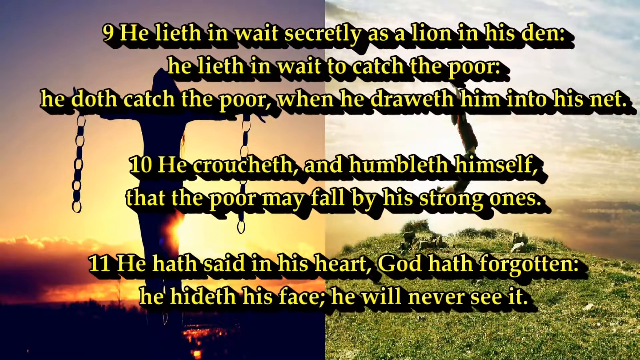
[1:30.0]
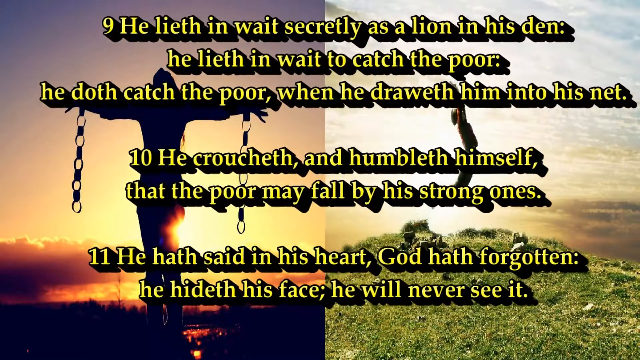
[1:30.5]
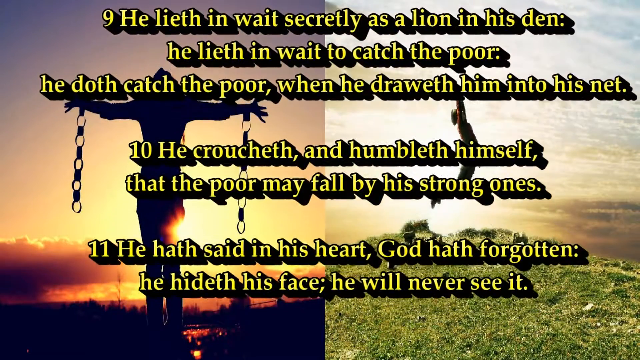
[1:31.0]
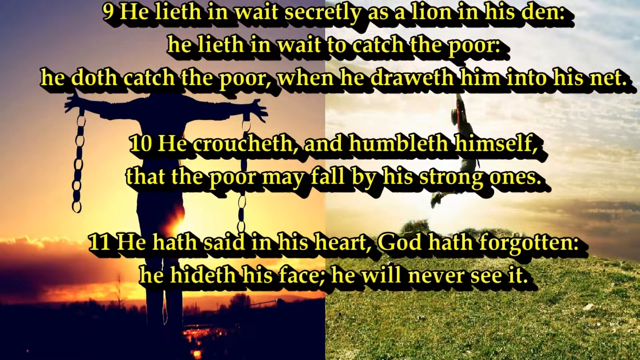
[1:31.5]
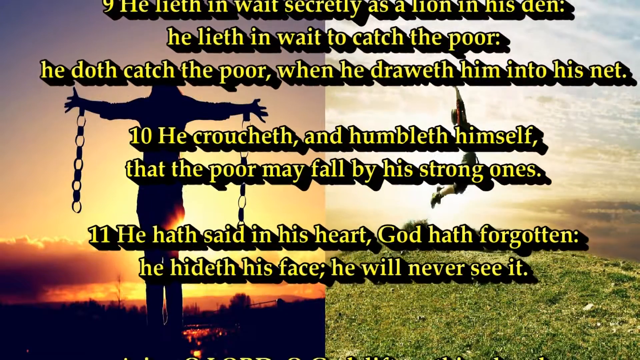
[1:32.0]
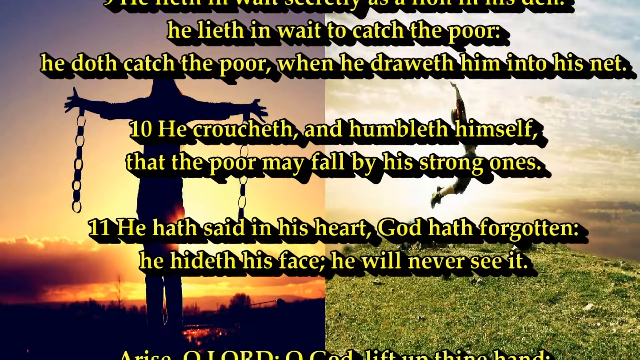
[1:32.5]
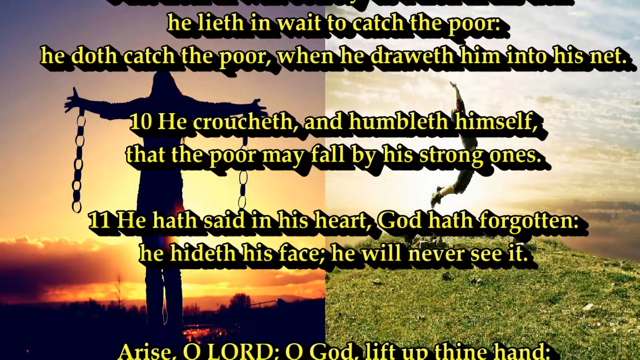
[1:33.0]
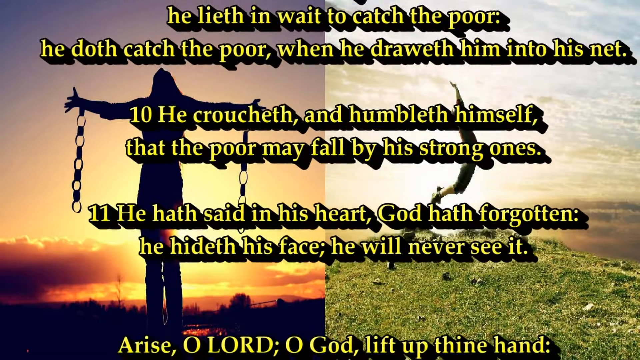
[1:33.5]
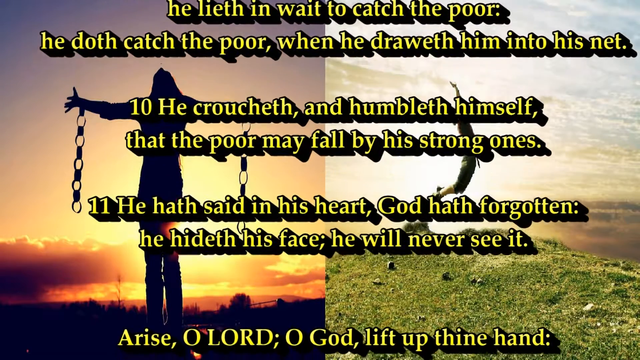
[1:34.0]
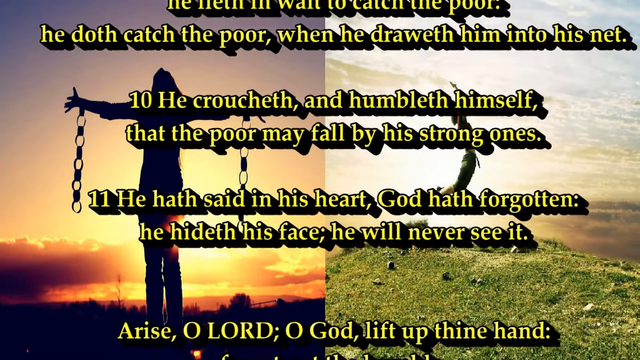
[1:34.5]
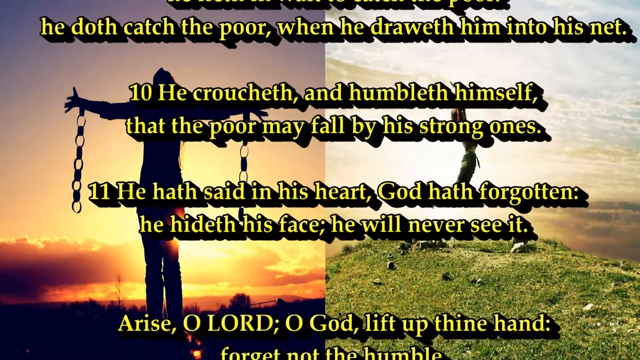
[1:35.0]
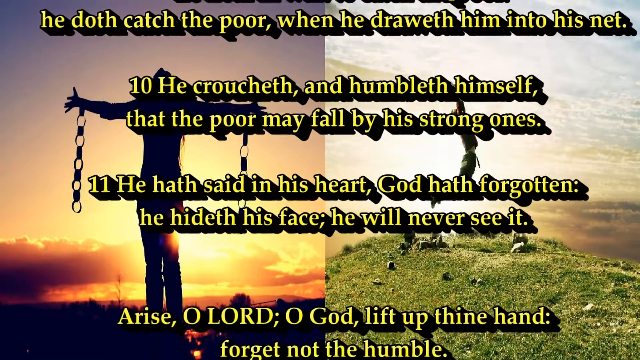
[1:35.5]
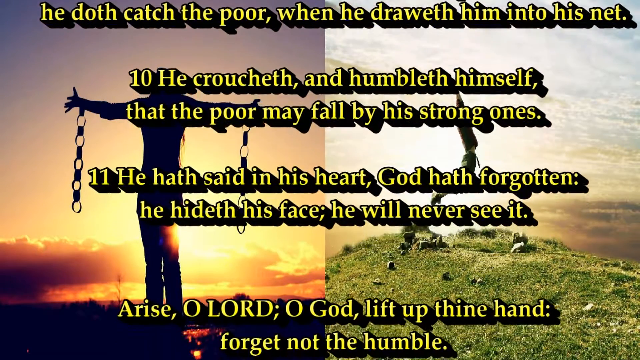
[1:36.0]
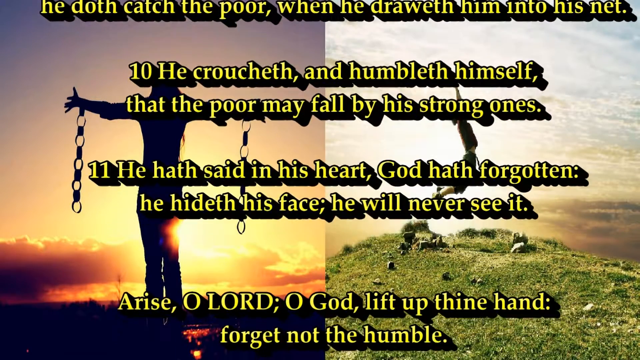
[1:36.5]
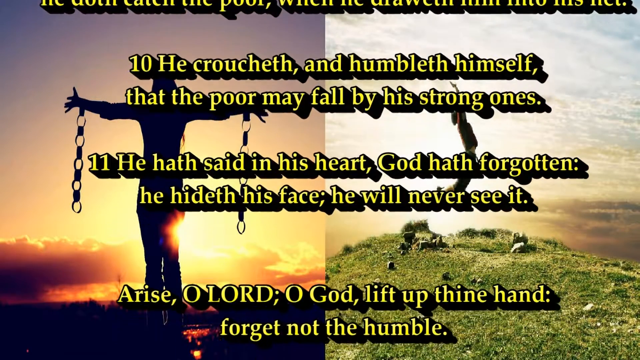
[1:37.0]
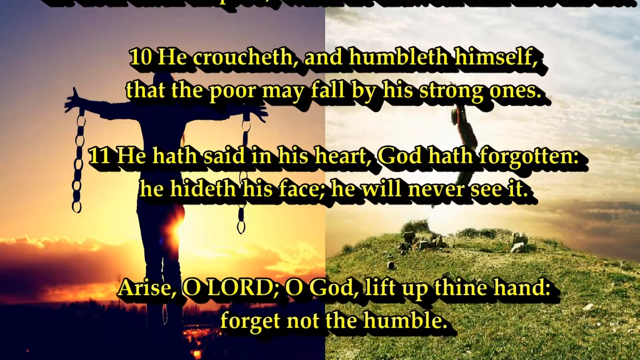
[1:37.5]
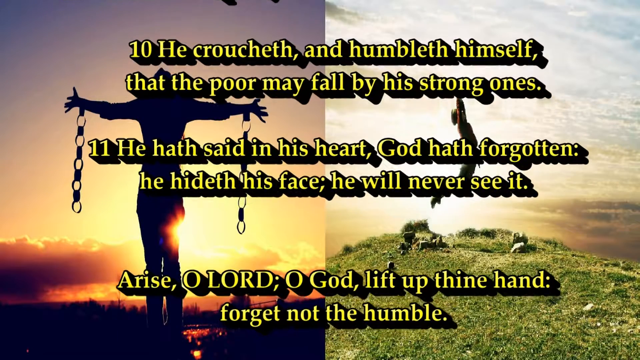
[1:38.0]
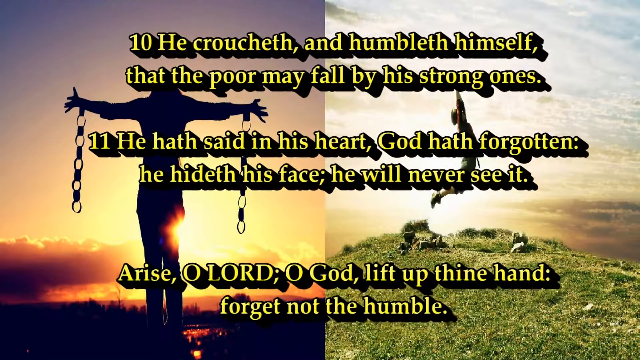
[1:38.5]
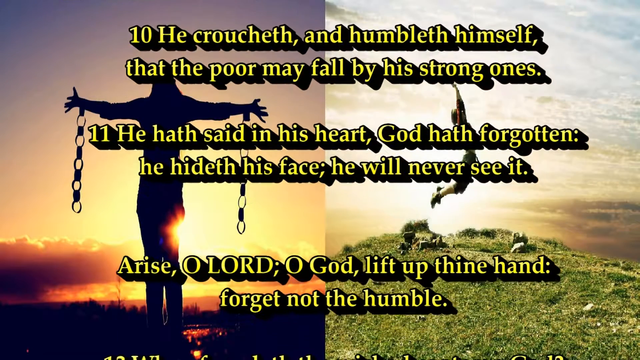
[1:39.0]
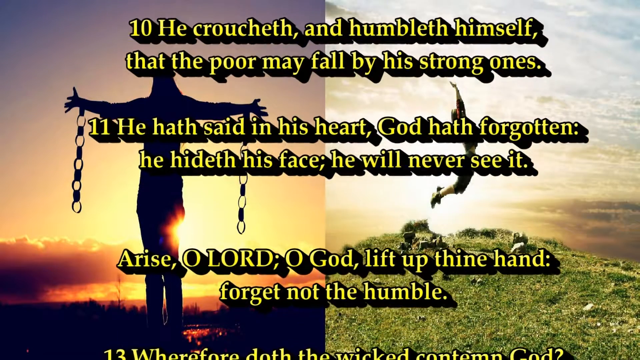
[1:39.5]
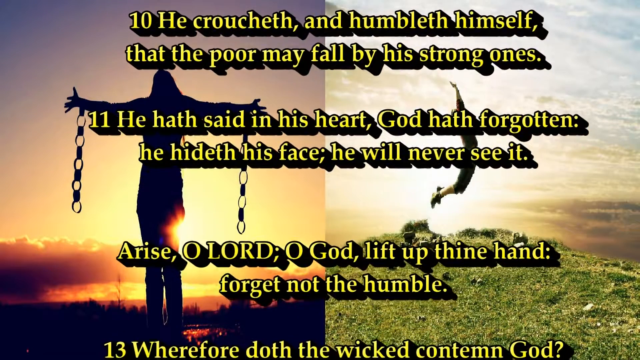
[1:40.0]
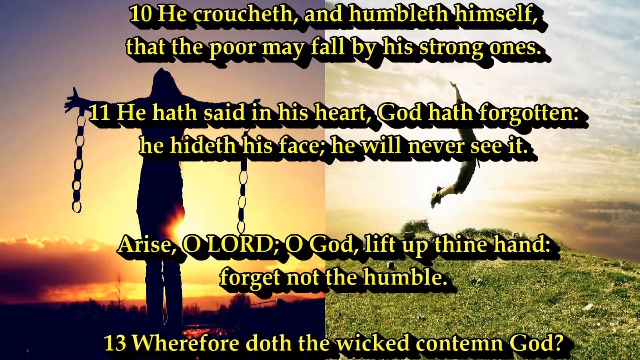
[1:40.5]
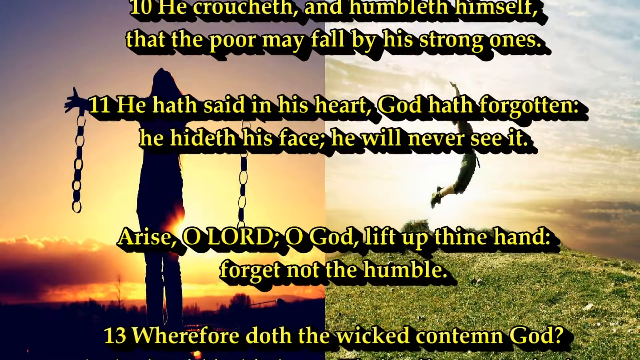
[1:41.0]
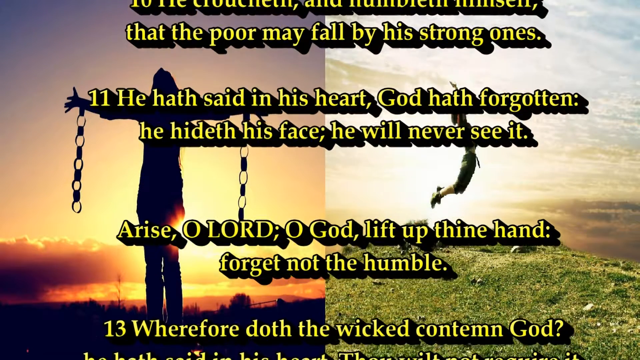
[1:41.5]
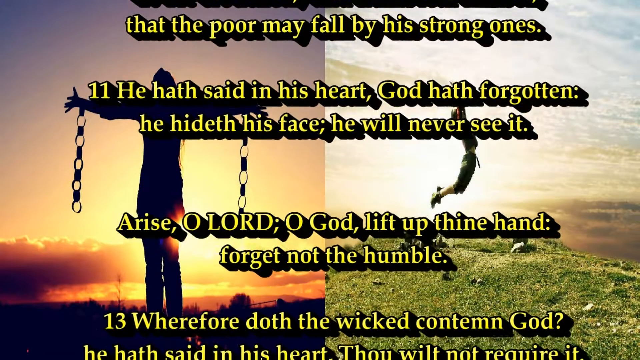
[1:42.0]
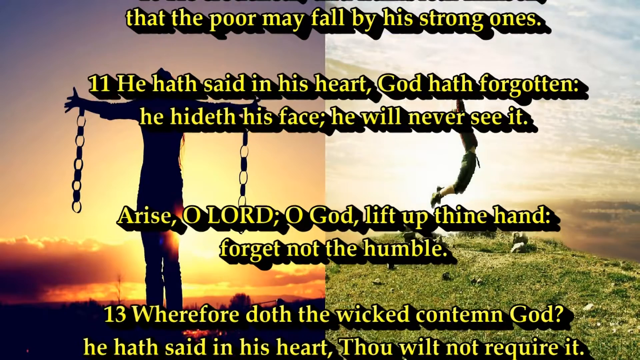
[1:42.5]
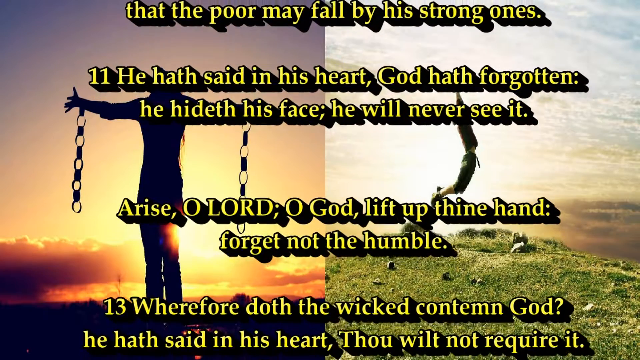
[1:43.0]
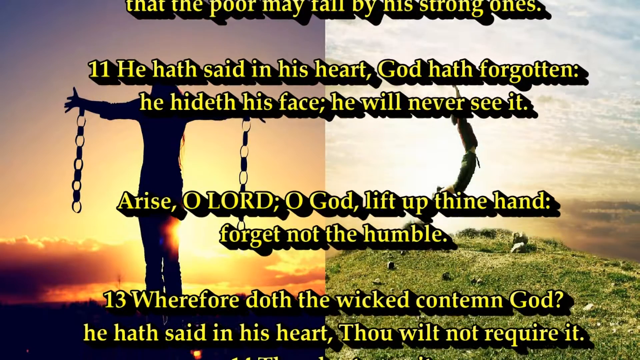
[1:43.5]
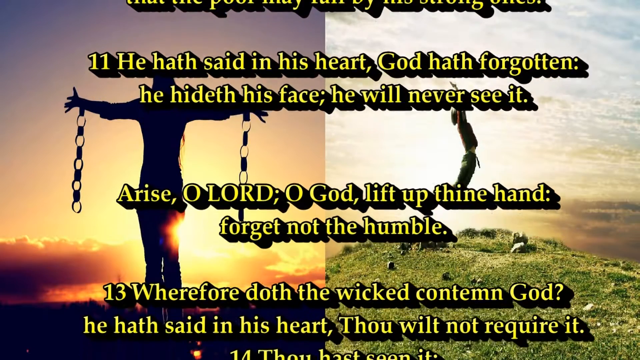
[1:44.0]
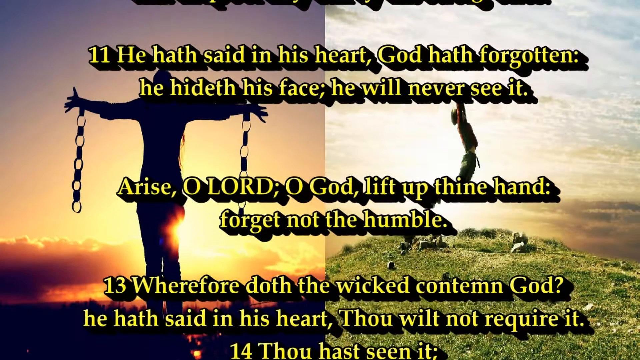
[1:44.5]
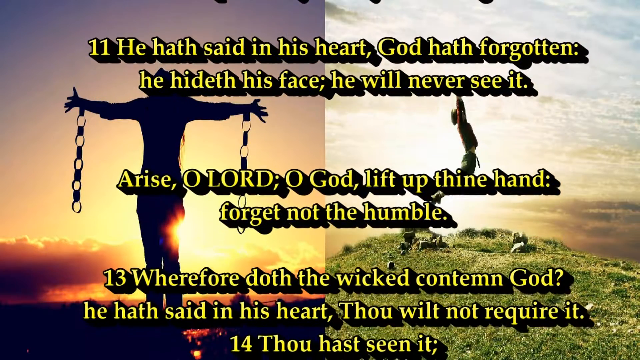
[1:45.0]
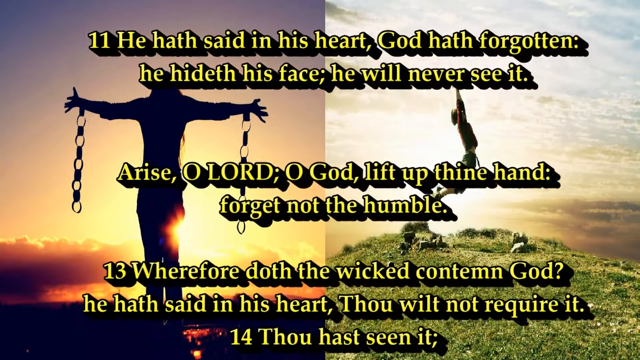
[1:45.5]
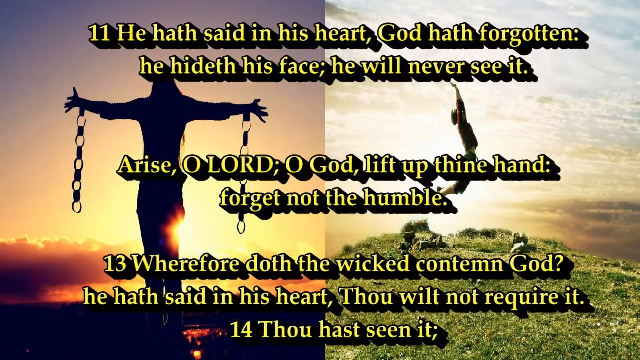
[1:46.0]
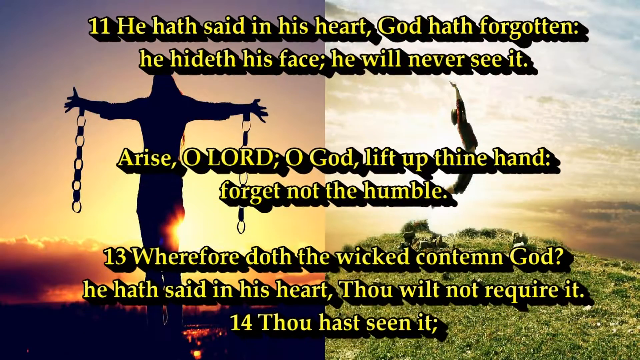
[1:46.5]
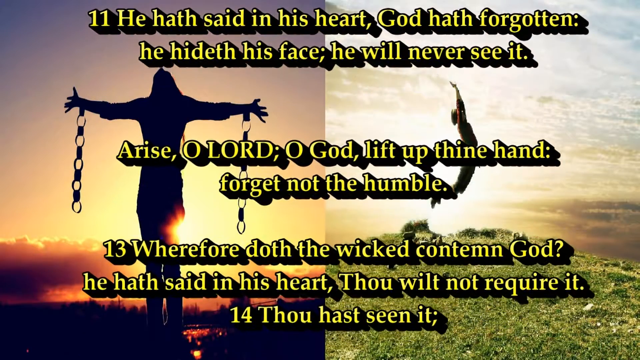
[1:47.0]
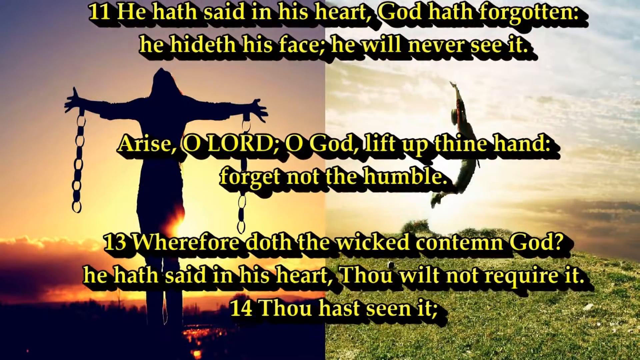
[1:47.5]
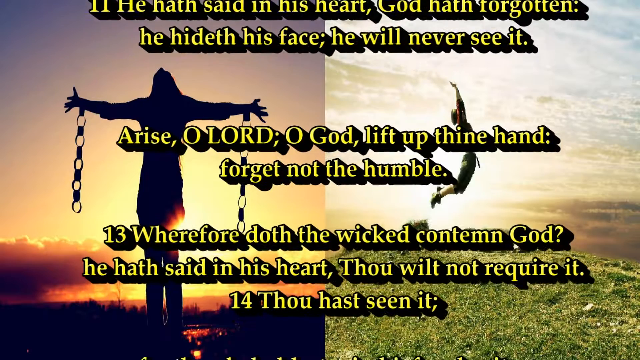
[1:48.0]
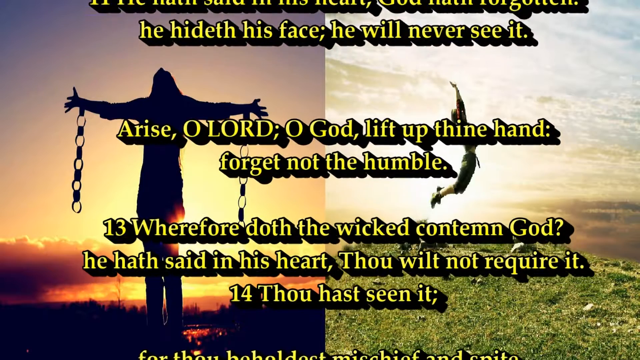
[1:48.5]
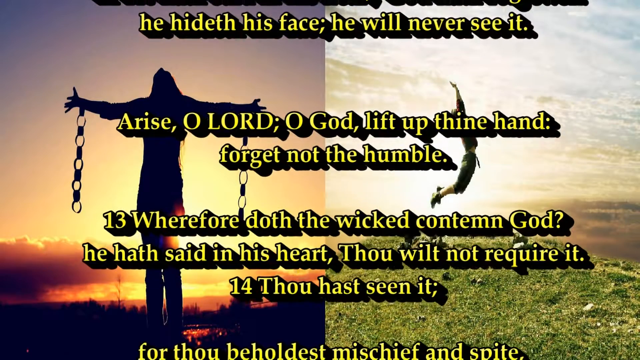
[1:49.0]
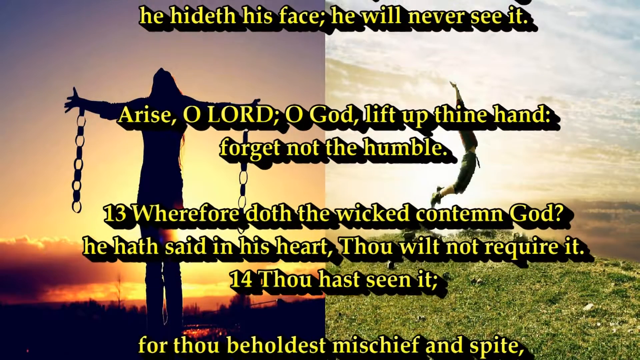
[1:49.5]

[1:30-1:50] The text begins at verse 9 of Psalm 10: "He lied in wait secretly as a lion in the den. He lied in wait to catch the poor. He does catch the poor when he throws him into his net." Verse 10 includes "that the poor may fall by his strong ones." Verse 11 reads "he has said in his heart, God has forgotten. He hid his face. He will never see it." The following verse is not numbered but seems to be 12: "Arise, O Lord, O God, lift up thine hand, forget not the humble." Verse 13 reads "Wherefore does the wicked contend God? He has said in the heart, Thou wilt not require it." Verse 14 then begins.